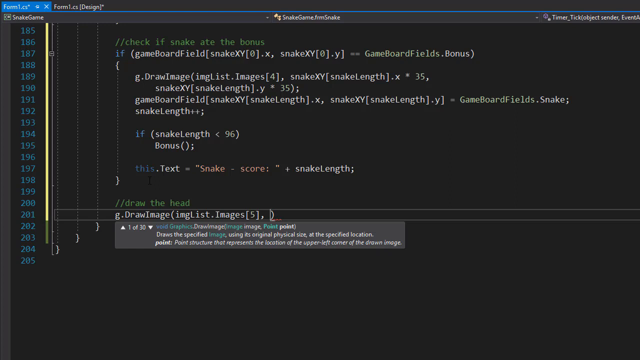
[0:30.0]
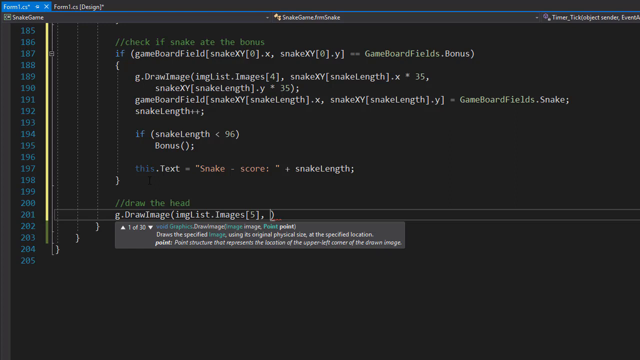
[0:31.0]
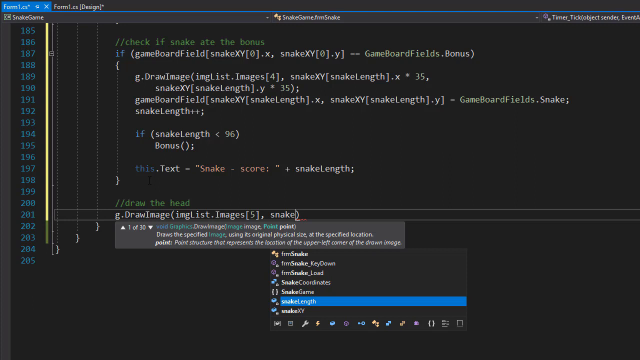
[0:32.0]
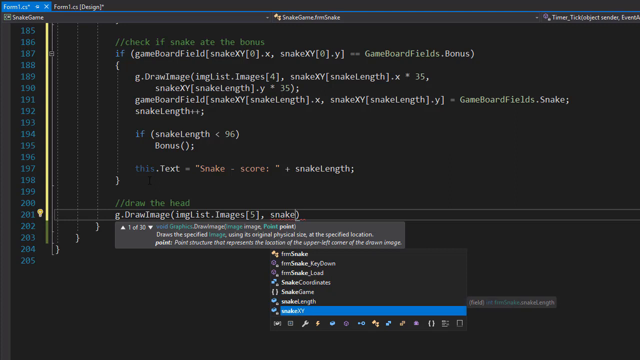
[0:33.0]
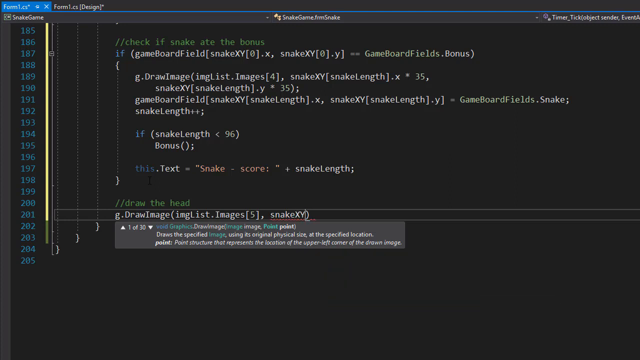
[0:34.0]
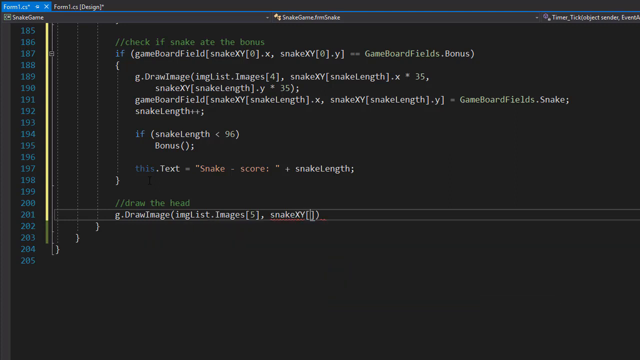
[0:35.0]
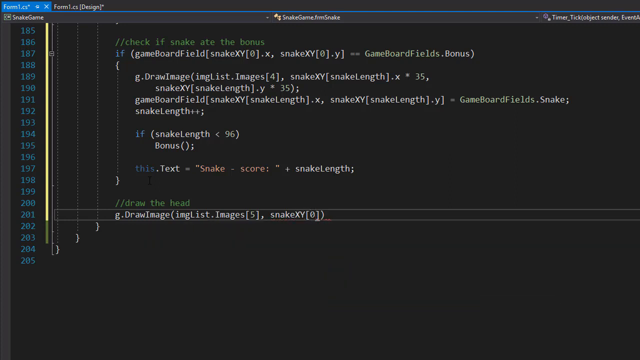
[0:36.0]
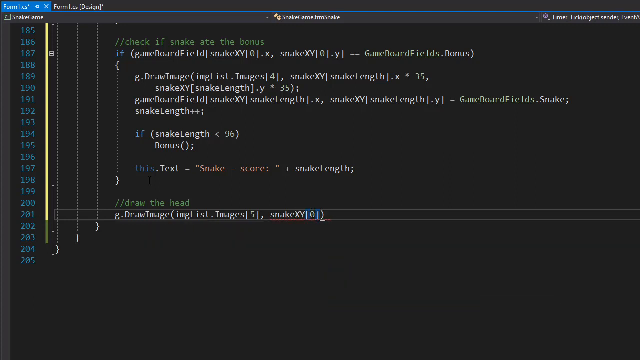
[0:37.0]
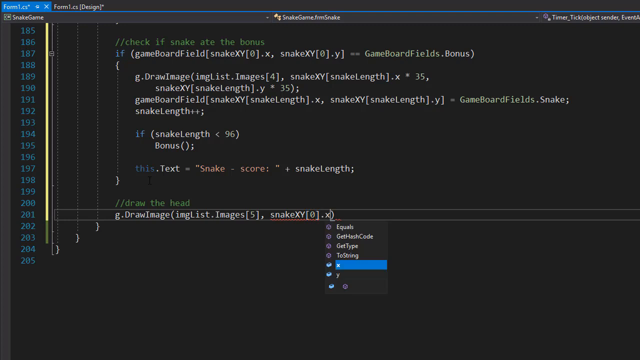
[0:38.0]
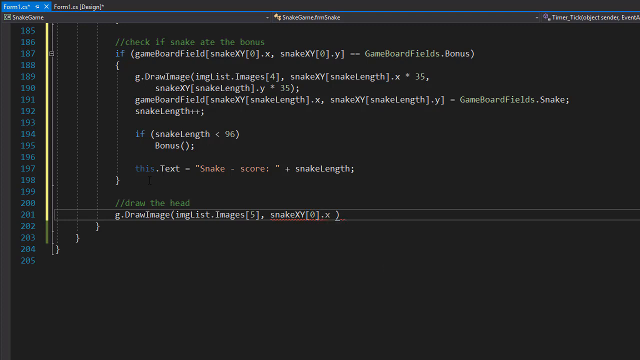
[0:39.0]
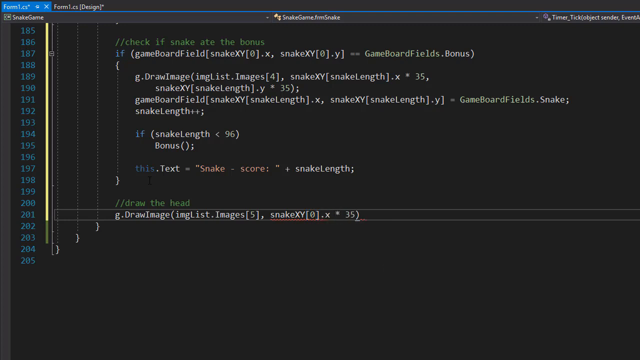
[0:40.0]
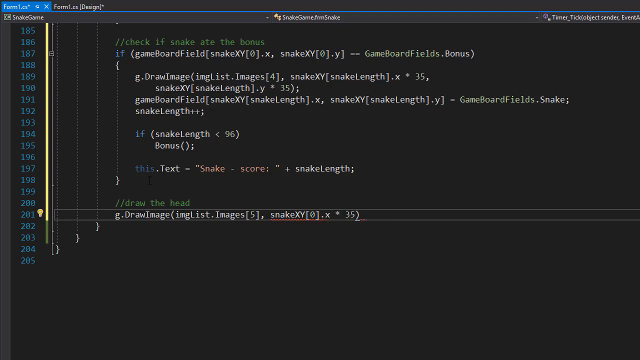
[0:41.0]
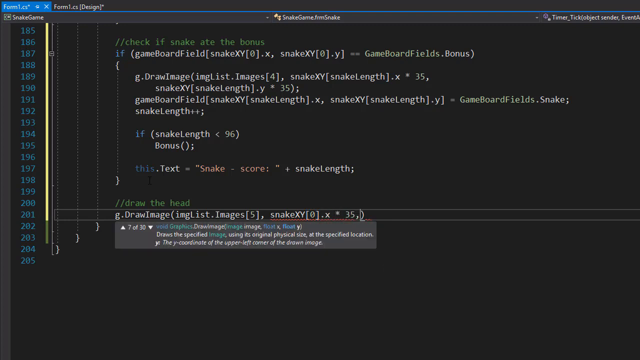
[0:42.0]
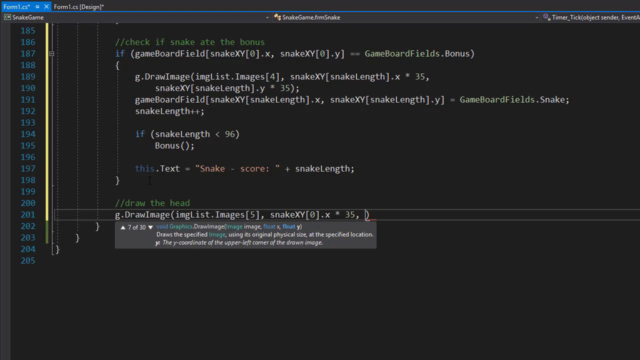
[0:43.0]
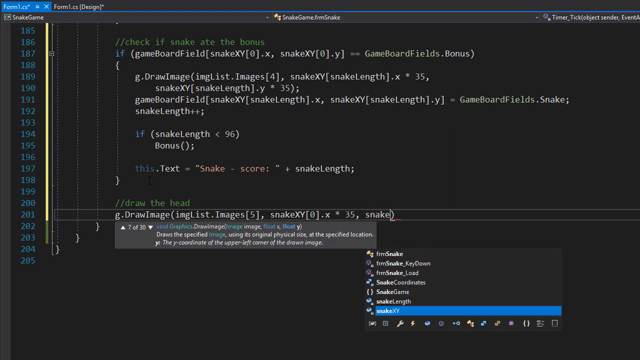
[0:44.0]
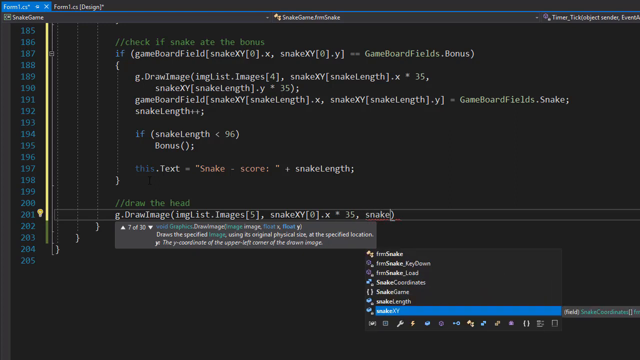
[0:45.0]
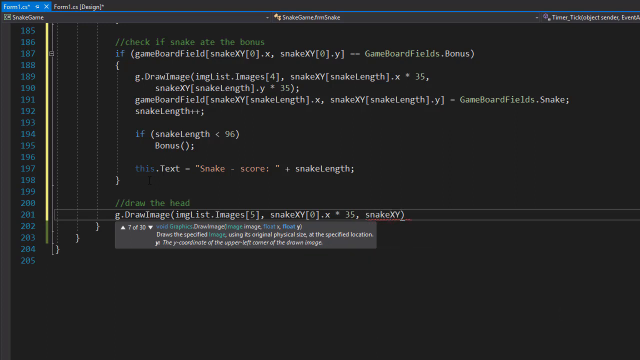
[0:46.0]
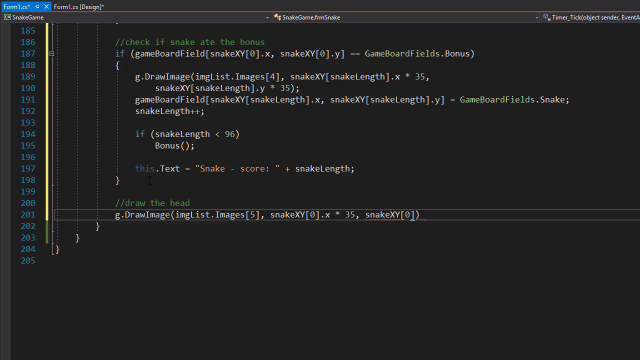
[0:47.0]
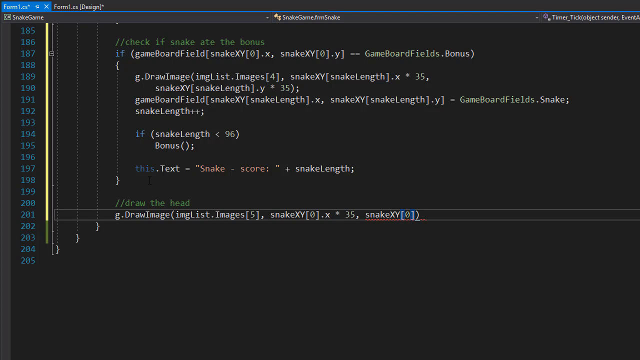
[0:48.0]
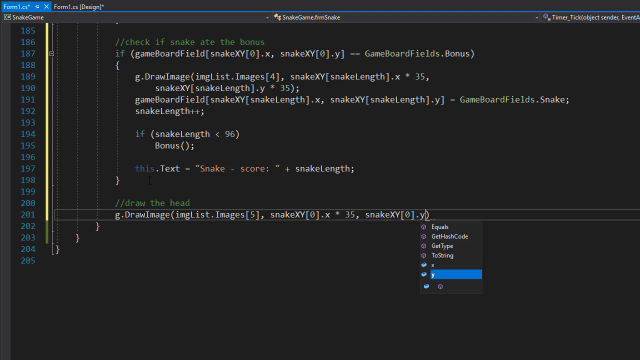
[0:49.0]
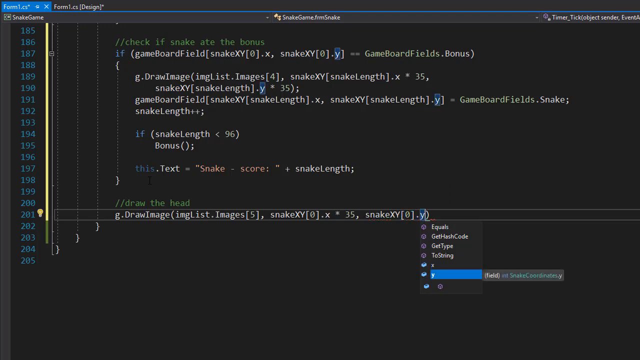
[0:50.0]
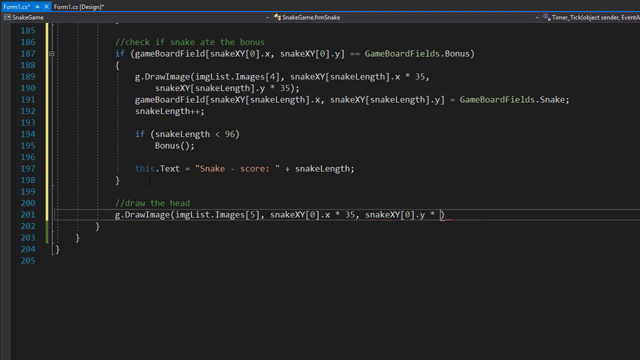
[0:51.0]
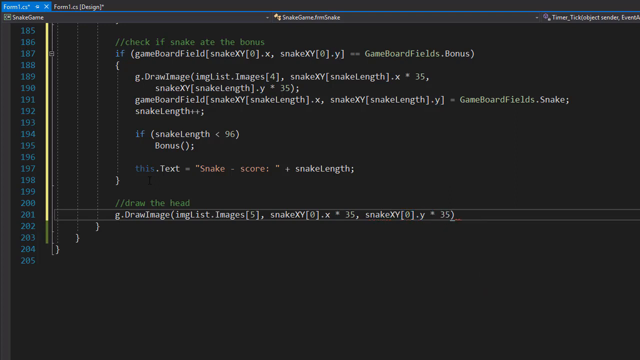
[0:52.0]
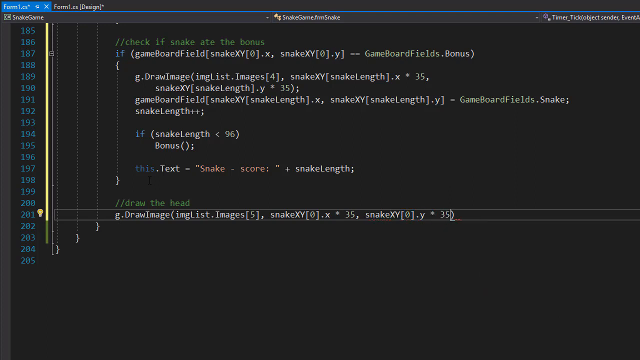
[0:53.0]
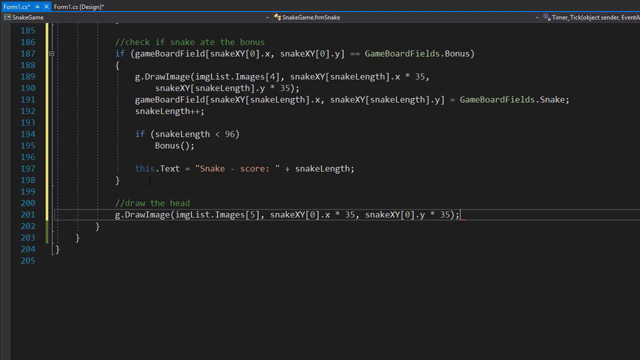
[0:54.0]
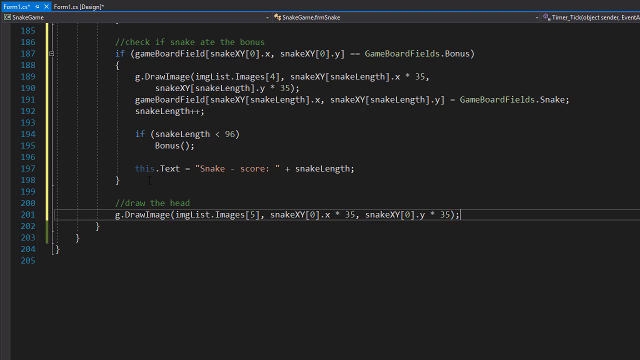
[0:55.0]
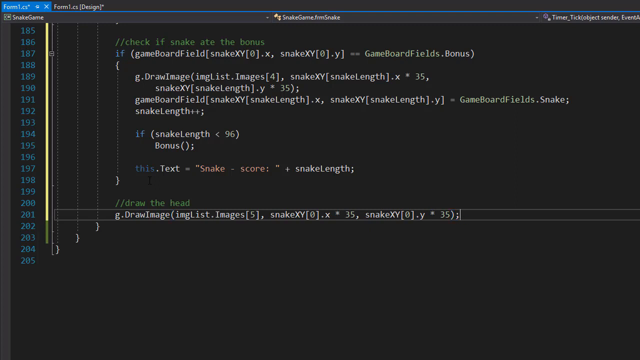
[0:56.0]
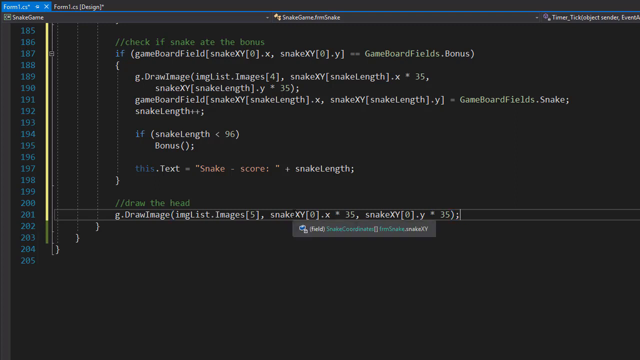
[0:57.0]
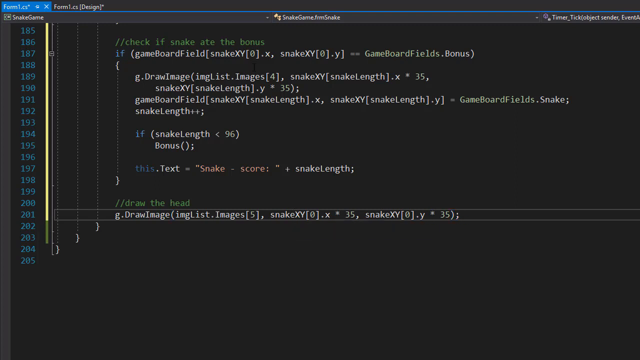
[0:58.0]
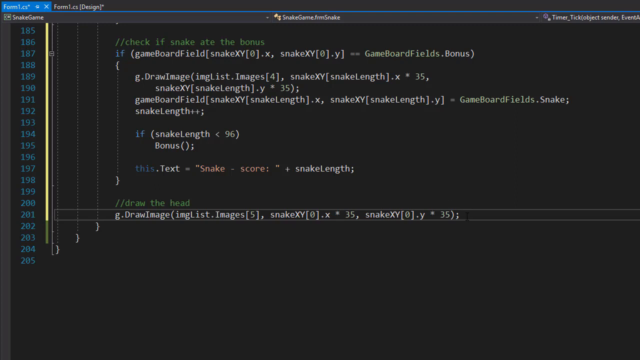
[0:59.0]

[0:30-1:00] The coding screen continues, possibly a tutorial. A command appears to read draw image, listing image number 5 with snake XY number 0 times 35 and snake XY number 0 Y times 35, followed by a closing parenthesis and a semicolon. The letters are entered from left to right across the screen. The background is black, and the line numbers along the left-hand side appear light blue or cyan. In the main code area, comment tags appear green, the if statements and other statements appear blue, and the code instructions appear in white text, with some reddish-pink text accents. Where the user types, a gray menu appears against the black background with white text and links that appear blue, apparently to help the user input the code.